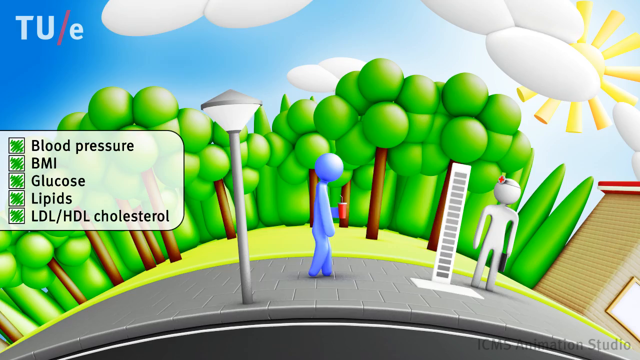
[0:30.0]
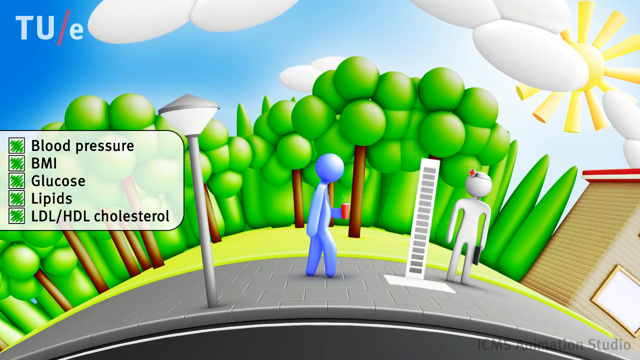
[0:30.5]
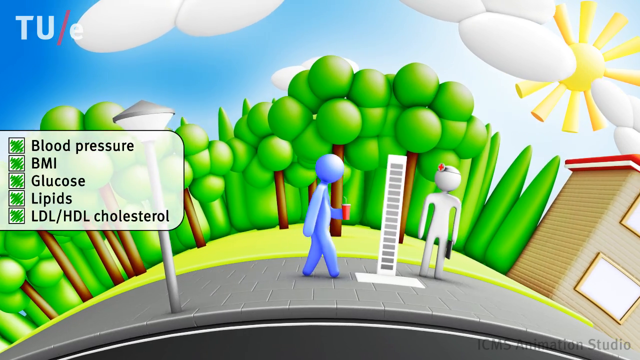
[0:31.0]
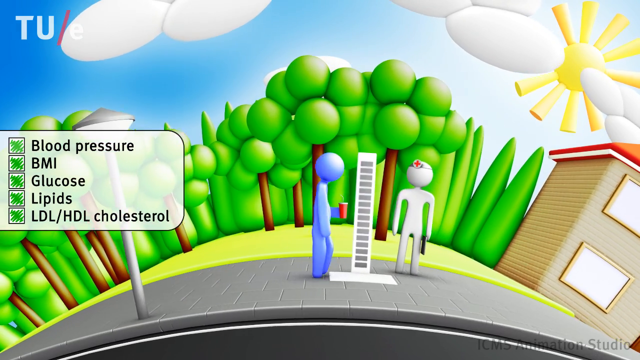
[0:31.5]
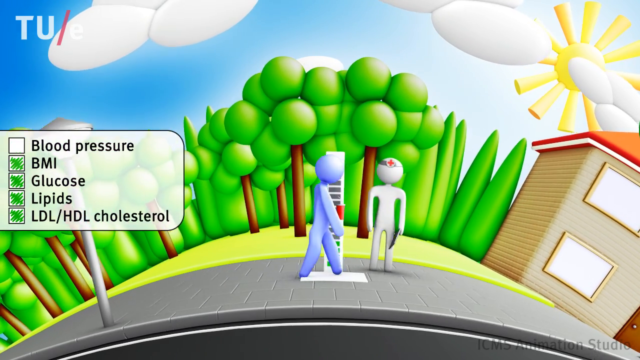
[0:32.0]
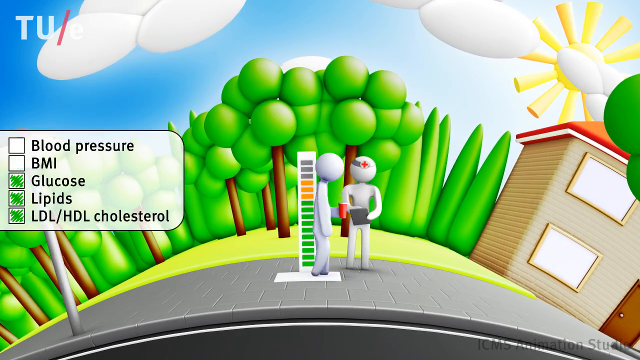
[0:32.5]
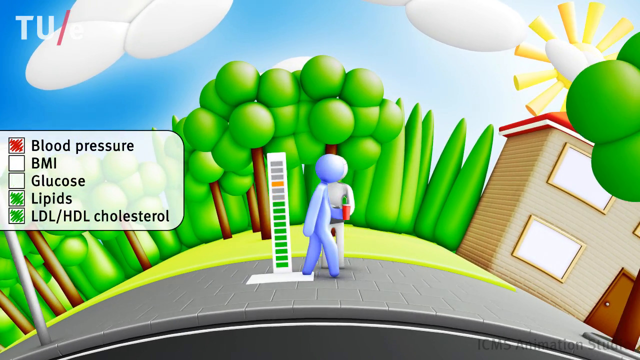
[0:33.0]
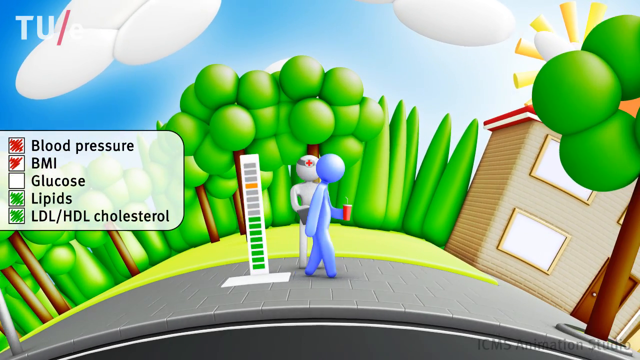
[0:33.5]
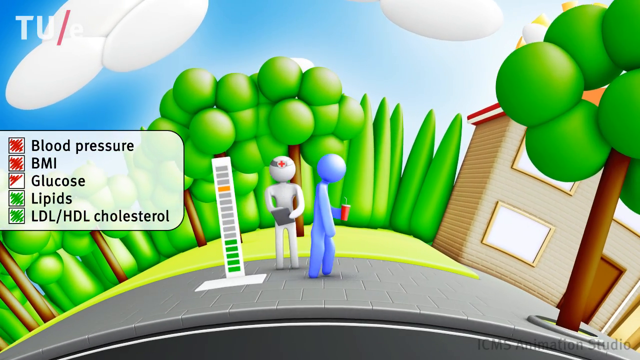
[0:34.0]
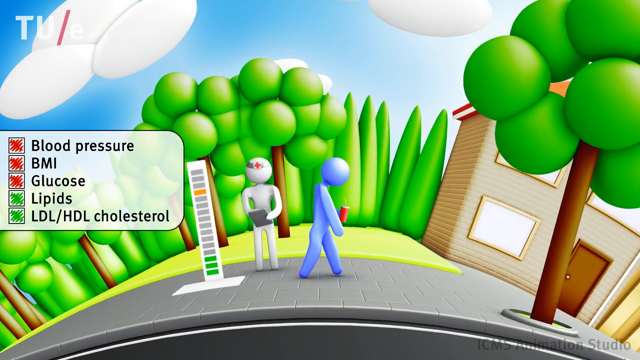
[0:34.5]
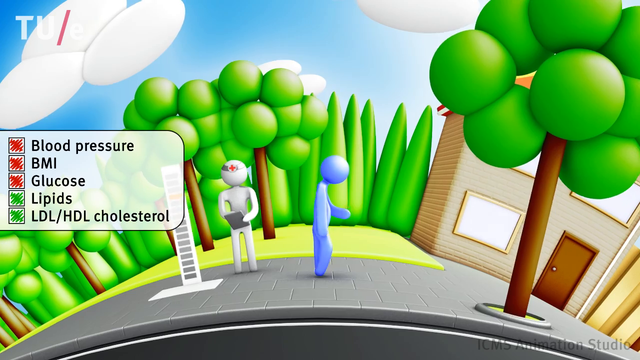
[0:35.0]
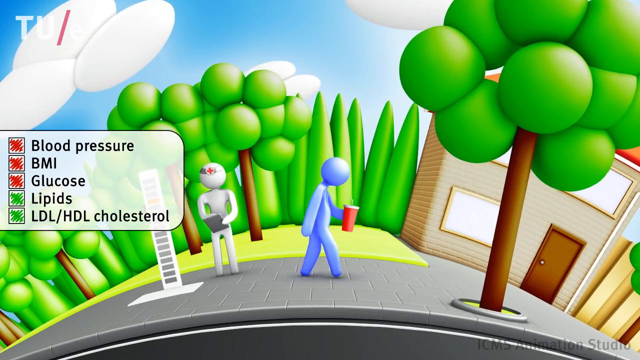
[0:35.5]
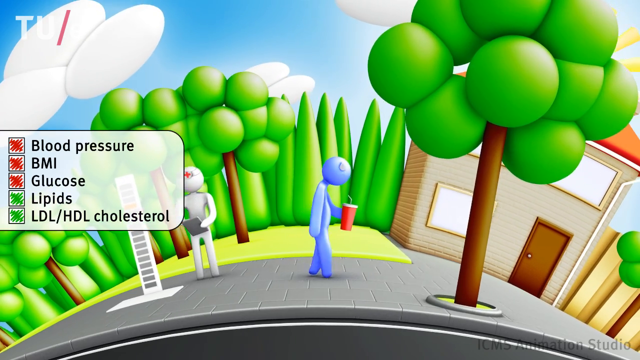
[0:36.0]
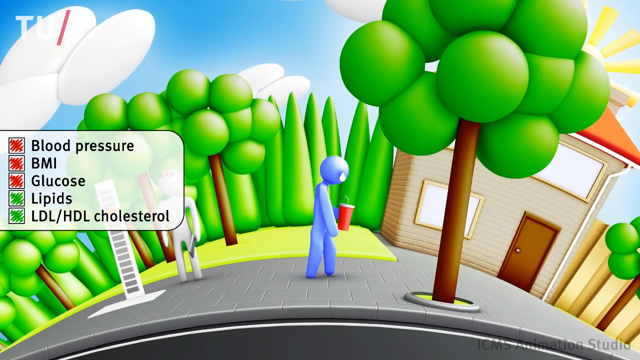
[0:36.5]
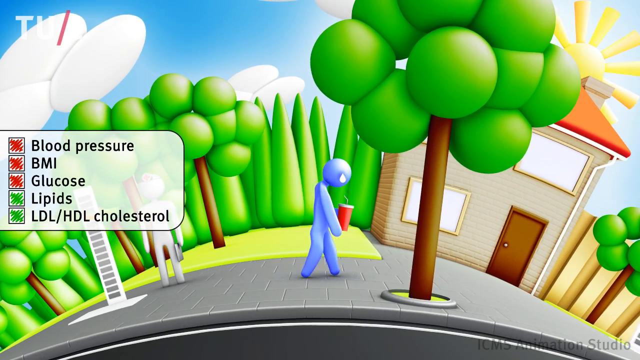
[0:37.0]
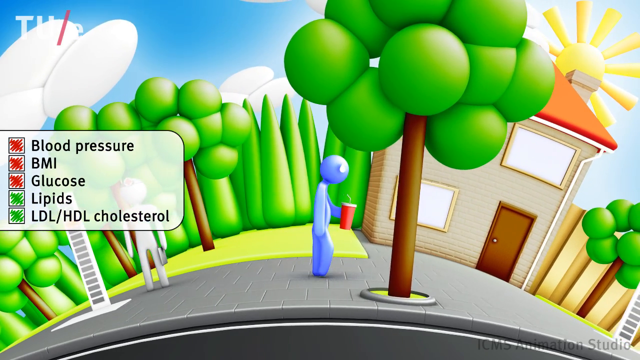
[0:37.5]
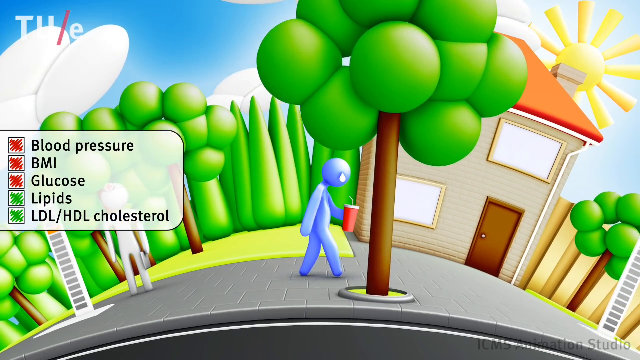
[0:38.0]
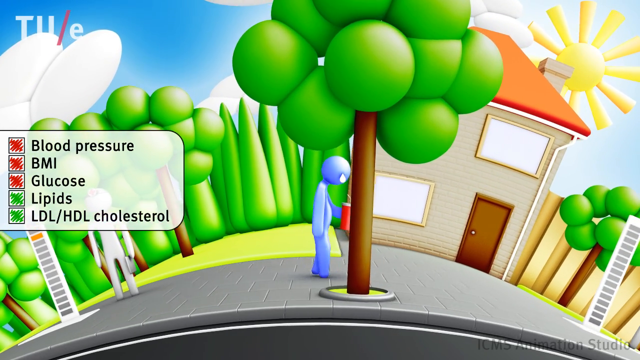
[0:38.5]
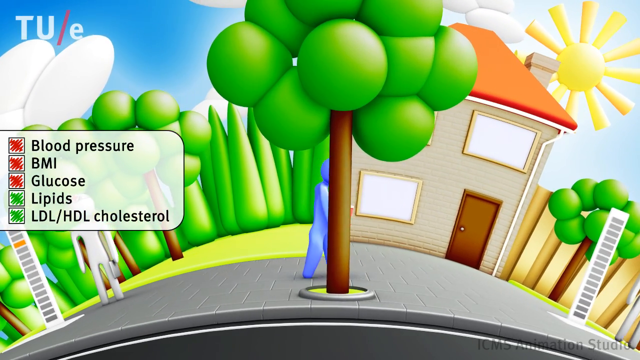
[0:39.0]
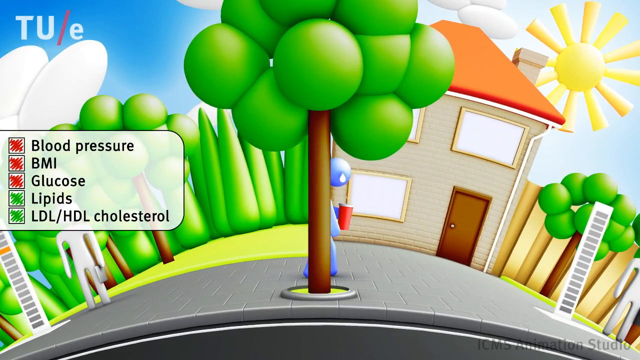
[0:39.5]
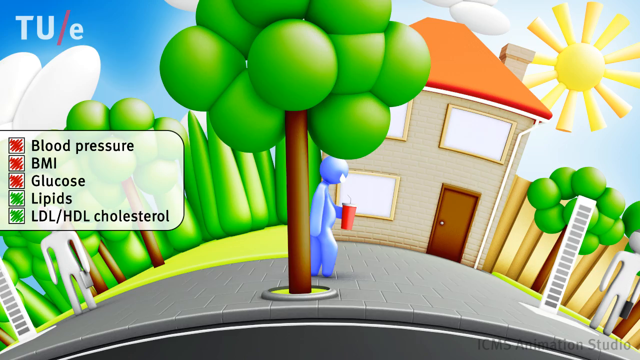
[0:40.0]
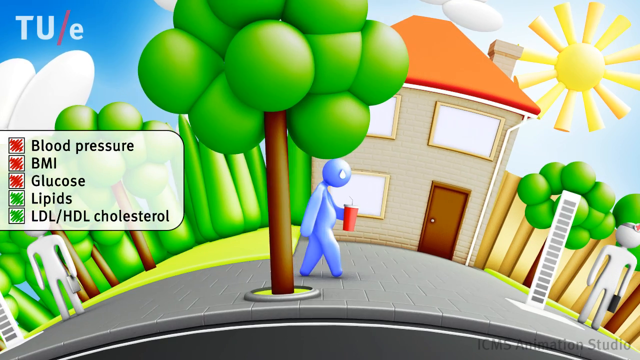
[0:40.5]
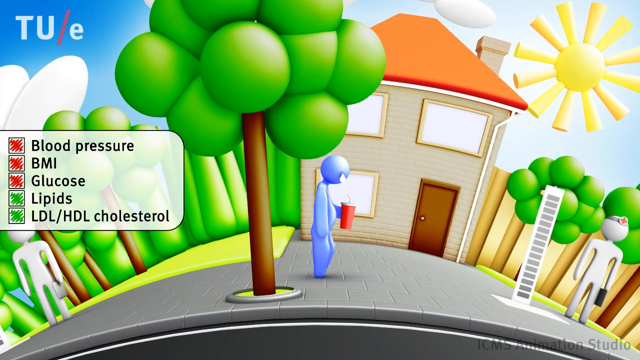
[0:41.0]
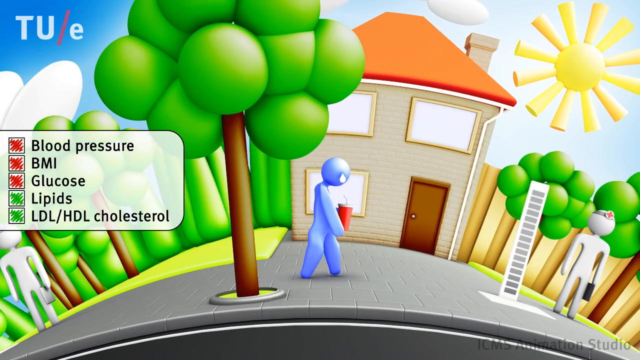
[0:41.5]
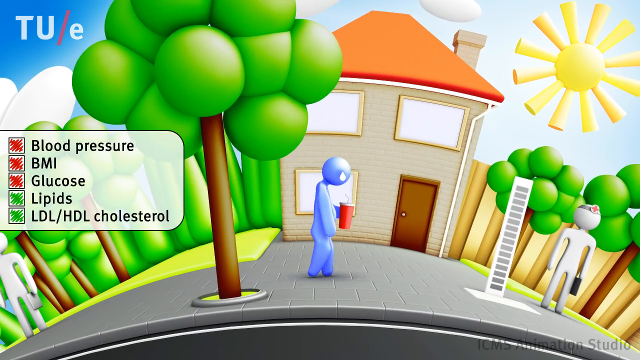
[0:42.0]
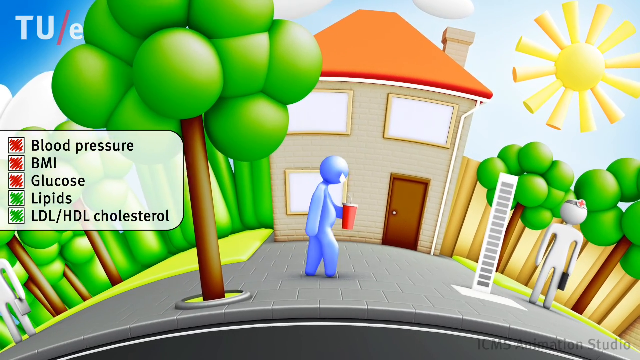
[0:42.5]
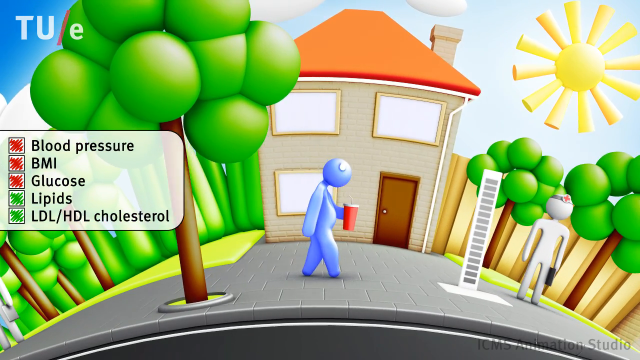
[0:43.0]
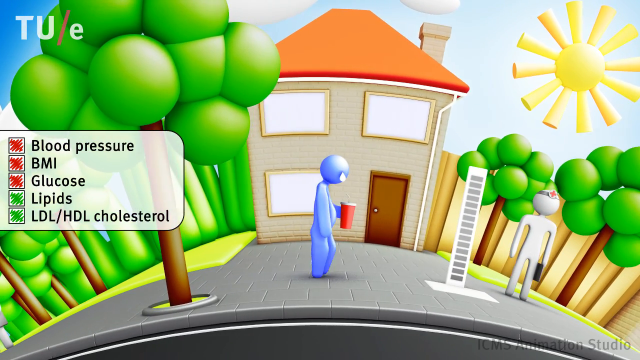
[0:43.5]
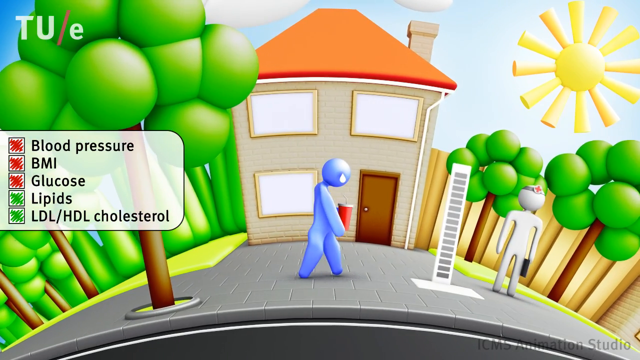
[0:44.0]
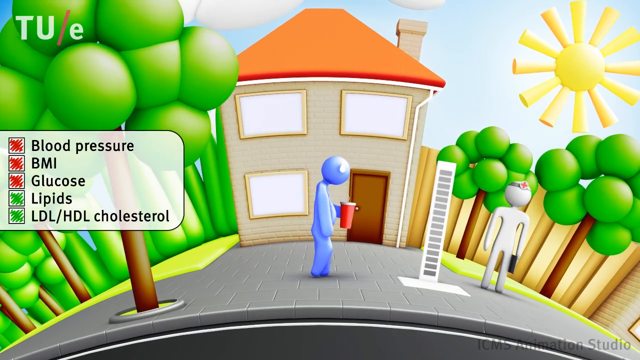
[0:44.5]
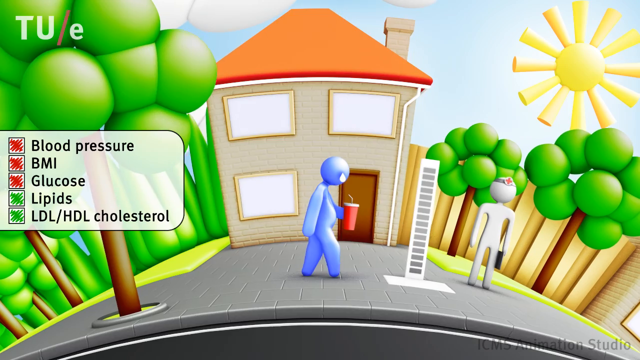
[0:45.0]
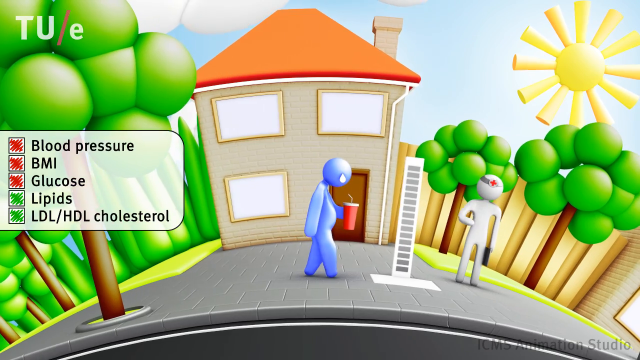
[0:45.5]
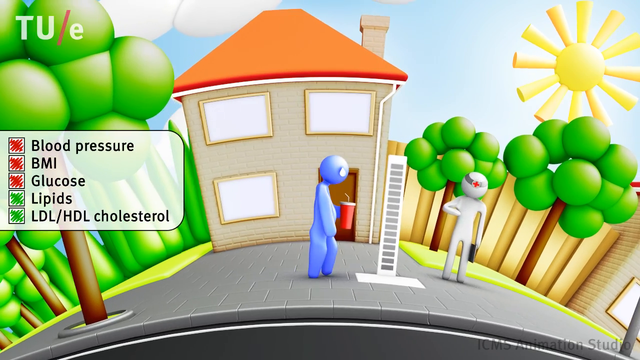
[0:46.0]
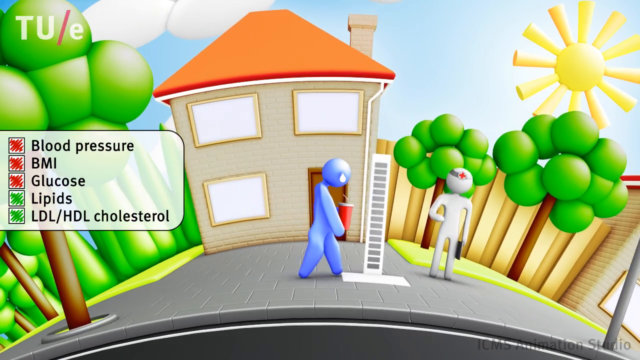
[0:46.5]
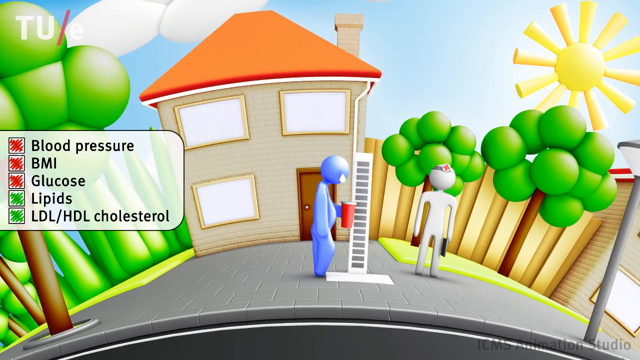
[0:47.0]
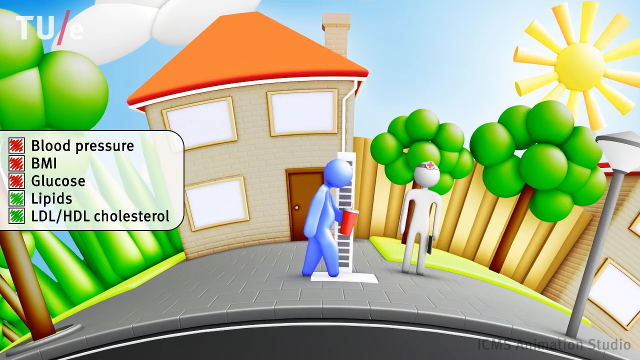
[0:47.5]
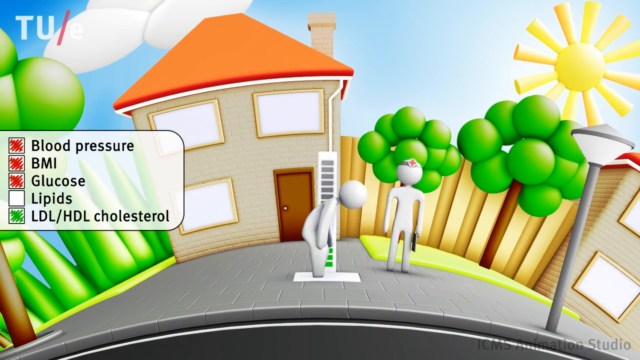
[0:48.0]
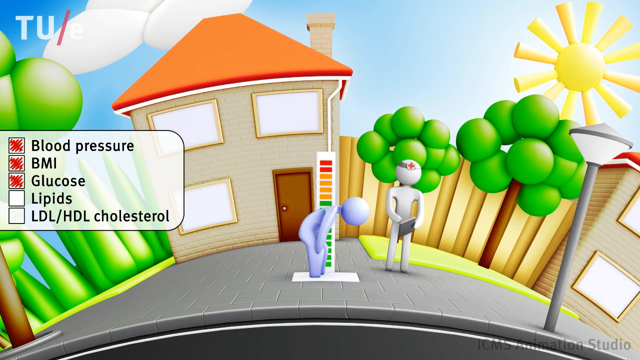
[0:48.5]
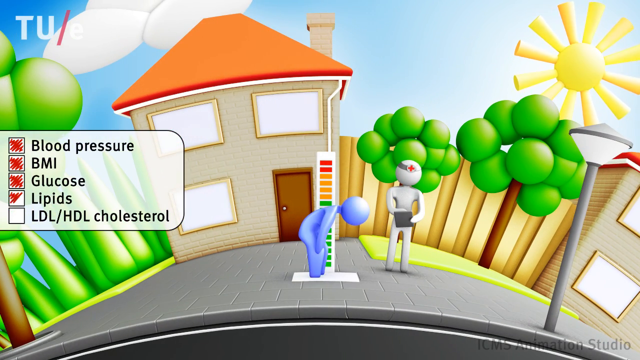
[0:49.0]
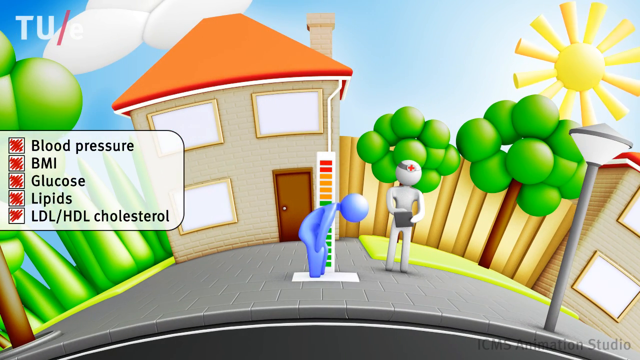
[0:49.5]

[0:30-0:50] In a colorful animated scene, a pale violet humanoid form walks along rather slowly, holding a red cup in his hand, with lots of trees, a blue sky, white clouds and the sun in the background. His head seems tilted downward as he walks past another humanoid form, which is white and stands beside what seems to be a measurement bar with green bars at the bottom and gray bars from the middle upward. On the left side of the screen are five body measurements: blood pressure, BMI, glucose, lipids, and LDL/HDL cholesterol. Lipids and cholesterol are shaded green on their left side, while blood pressure, BMI and glucose are shaded red. The violet humanoid droops his head and walks more slowly, with drops of sweat falling from his round head. He walks behind a tree, ever more slowly. The red cup in his hands looks larger, and he looks like he has gotten fatter and developed a pot belly. He walks past the house with a red rooftop, with the sun shining in the sky in the upper right, while the white humanoid stands and watches him go by. Finally, the violet figure stands on what looks like some sort of measurement scale and leans over, hands on knees. The white figure has what looks like a red cross on his head, holds a clipboard and seems to be taking notes.